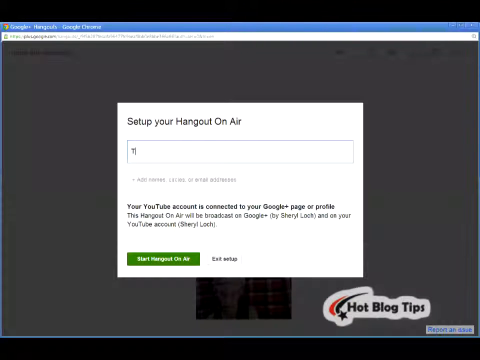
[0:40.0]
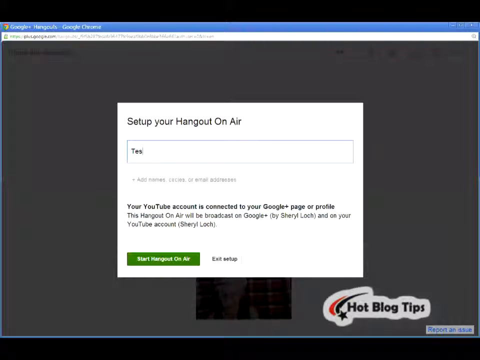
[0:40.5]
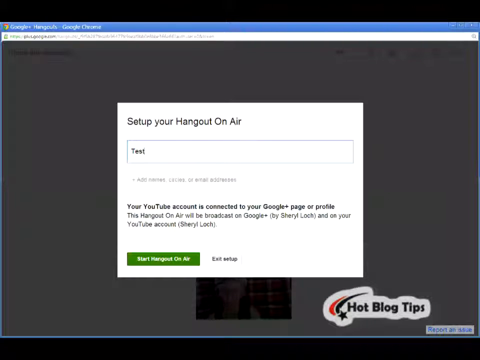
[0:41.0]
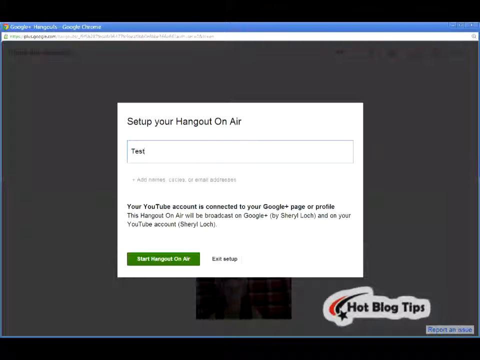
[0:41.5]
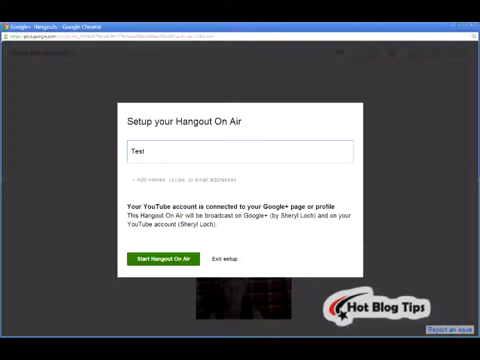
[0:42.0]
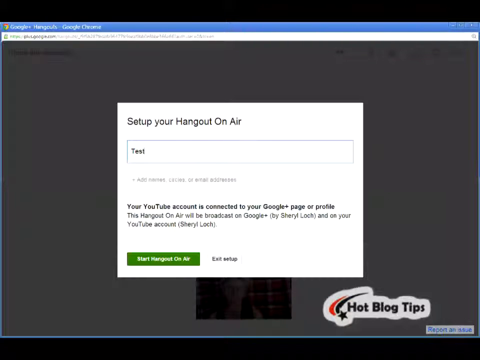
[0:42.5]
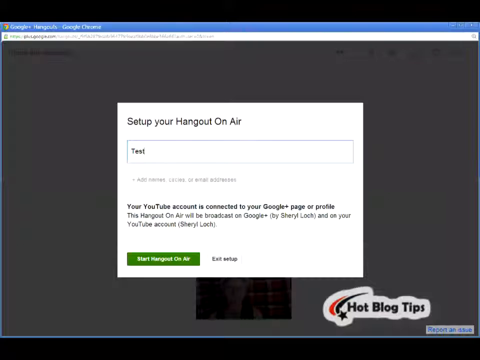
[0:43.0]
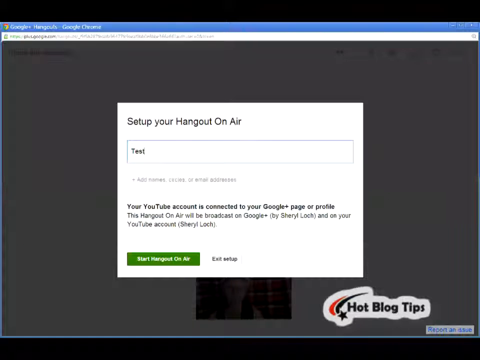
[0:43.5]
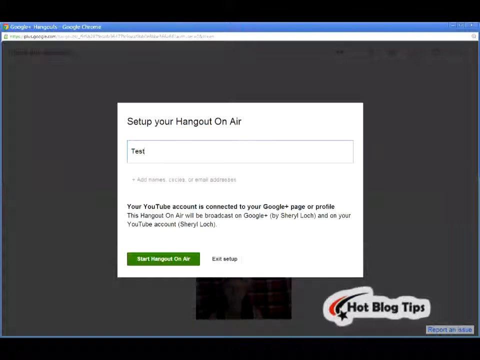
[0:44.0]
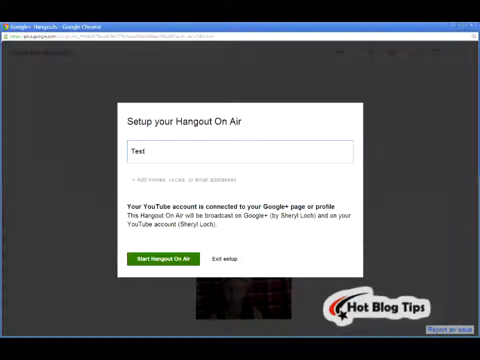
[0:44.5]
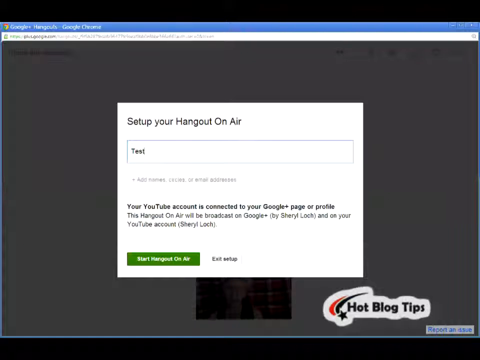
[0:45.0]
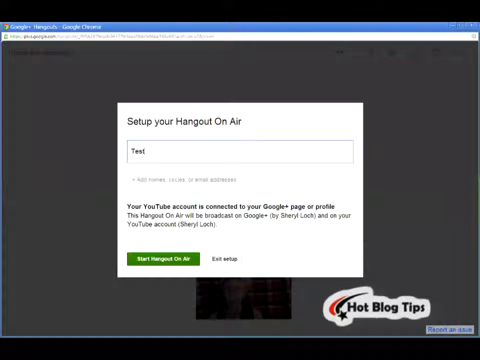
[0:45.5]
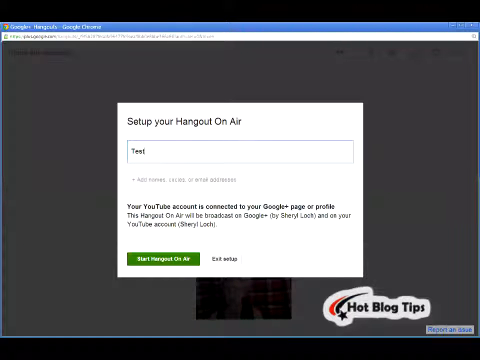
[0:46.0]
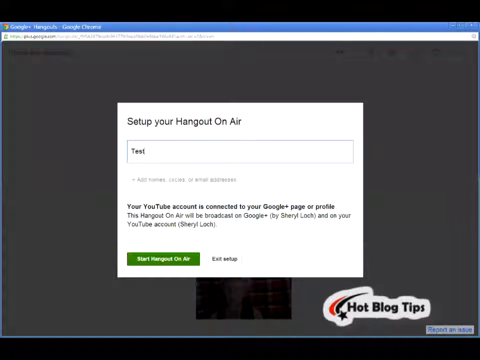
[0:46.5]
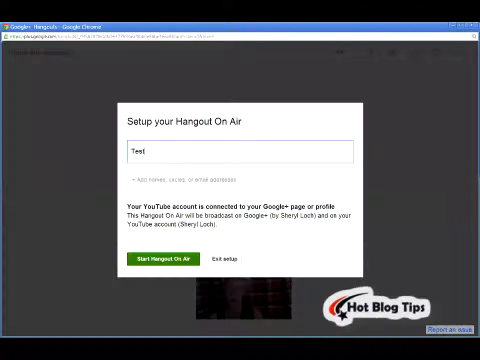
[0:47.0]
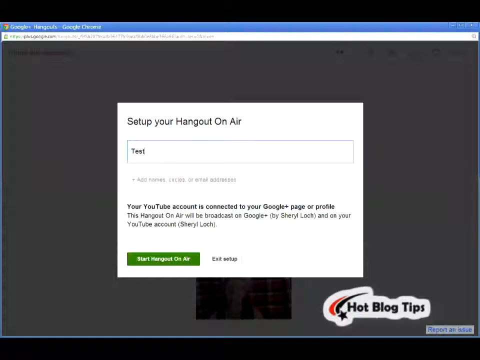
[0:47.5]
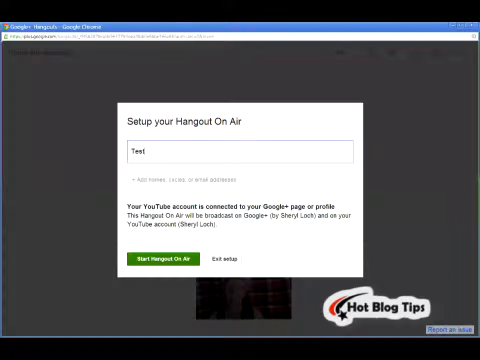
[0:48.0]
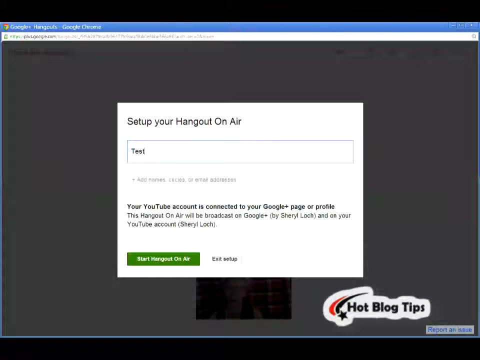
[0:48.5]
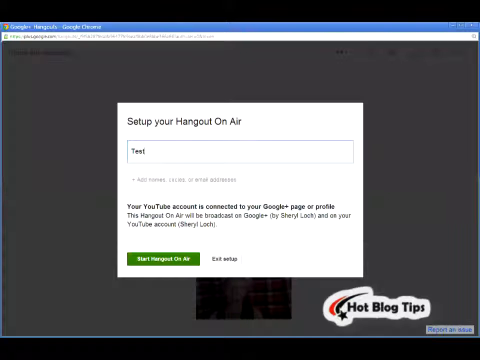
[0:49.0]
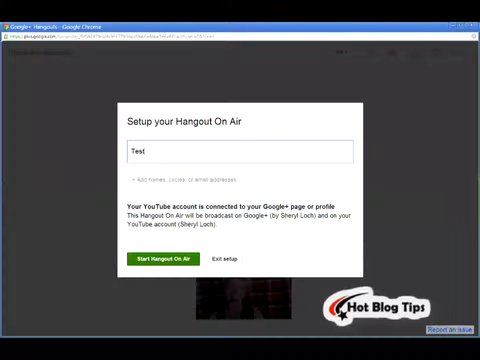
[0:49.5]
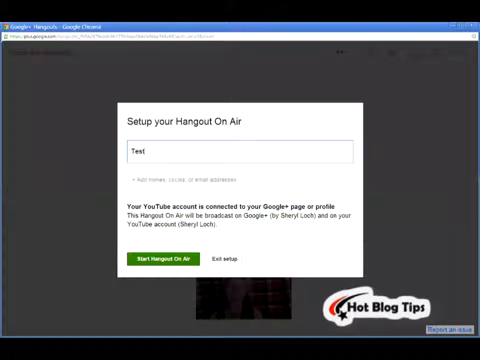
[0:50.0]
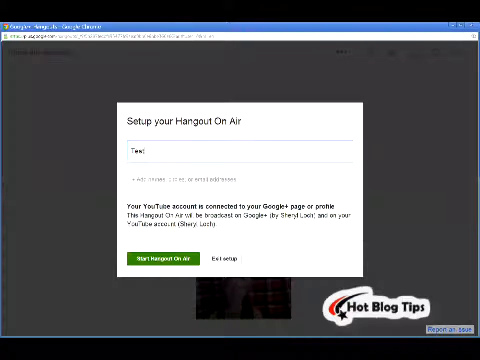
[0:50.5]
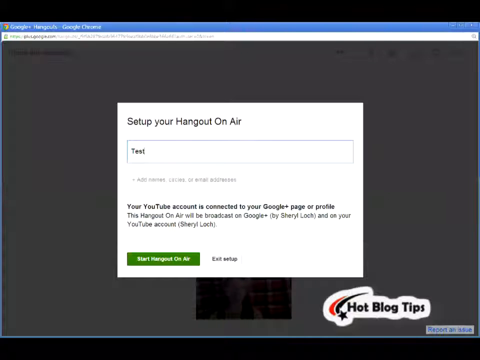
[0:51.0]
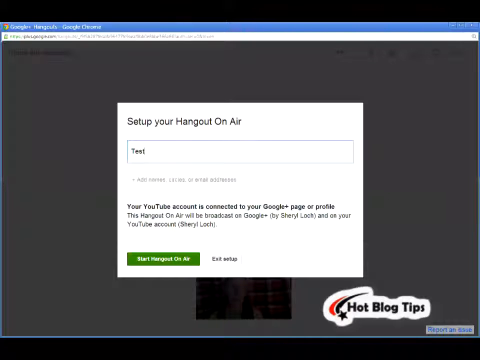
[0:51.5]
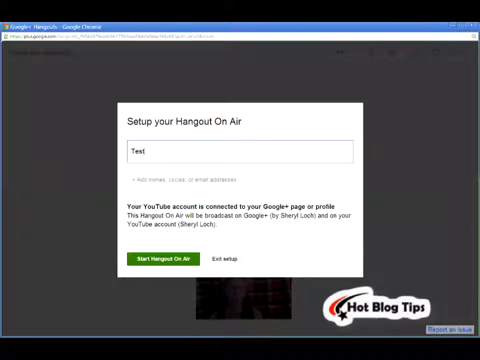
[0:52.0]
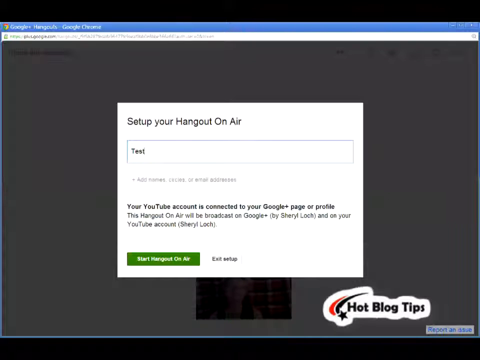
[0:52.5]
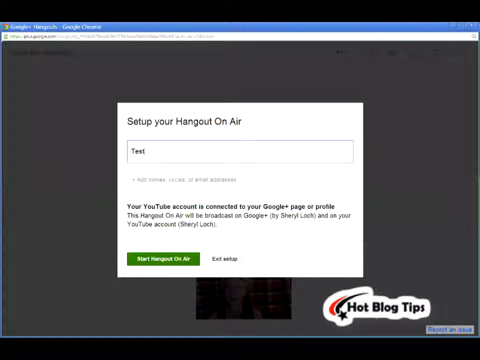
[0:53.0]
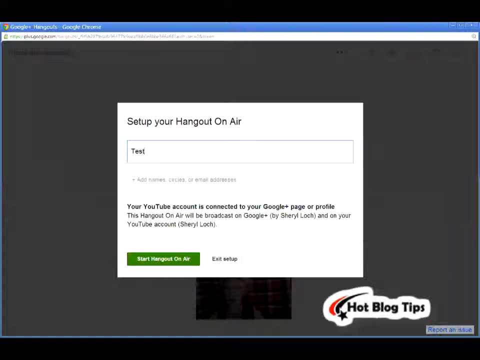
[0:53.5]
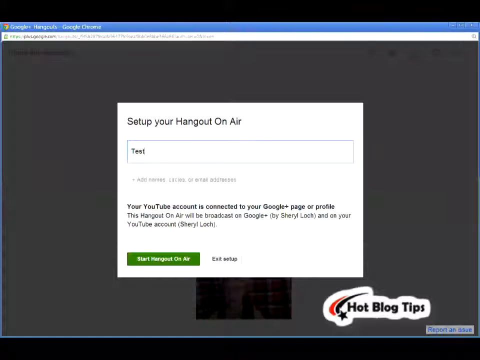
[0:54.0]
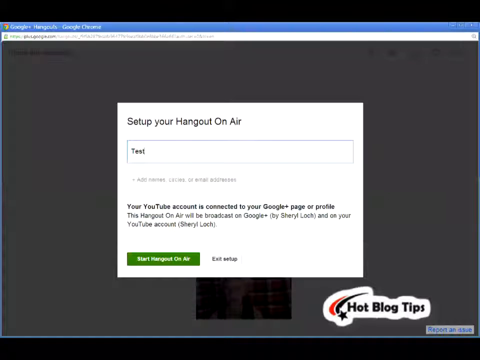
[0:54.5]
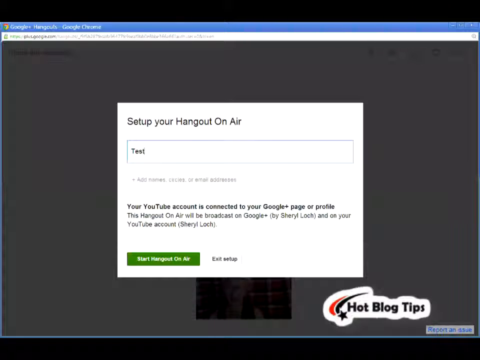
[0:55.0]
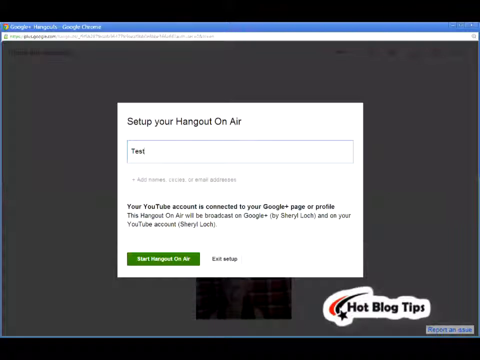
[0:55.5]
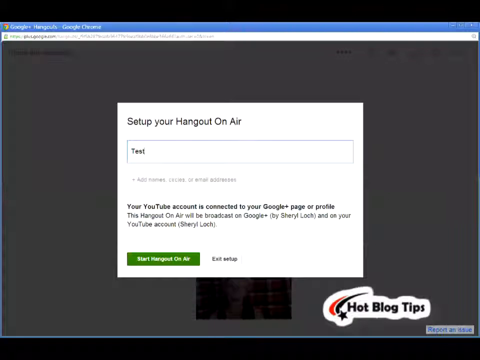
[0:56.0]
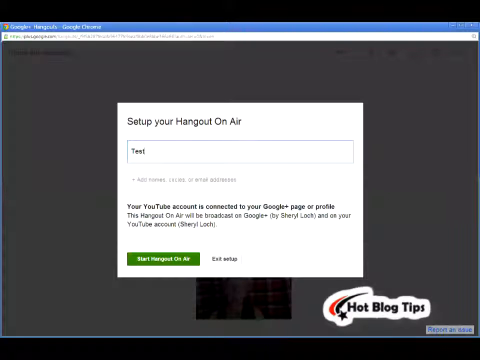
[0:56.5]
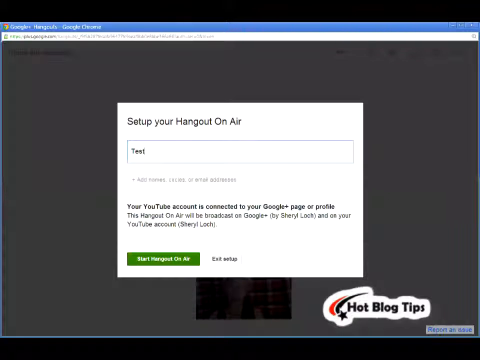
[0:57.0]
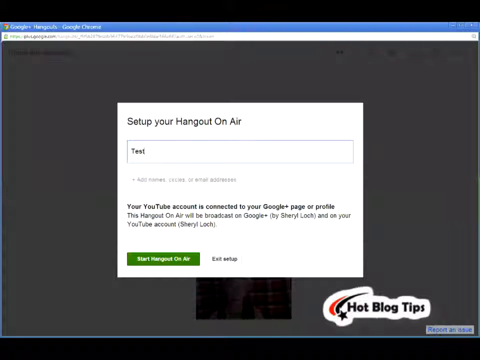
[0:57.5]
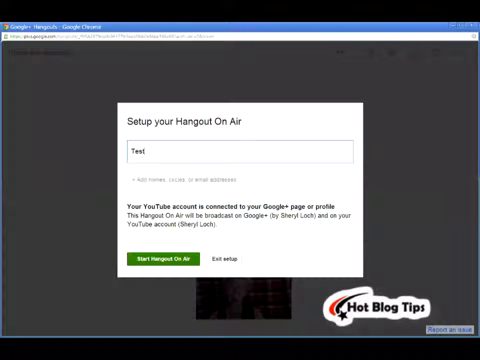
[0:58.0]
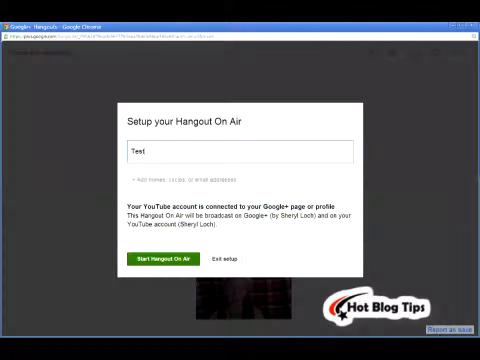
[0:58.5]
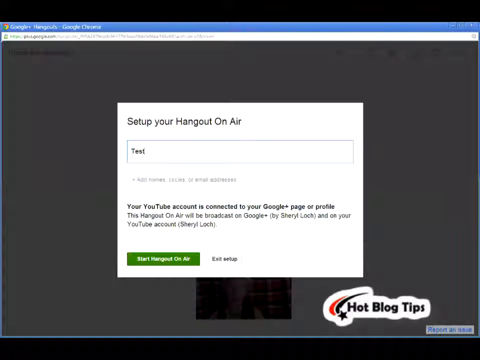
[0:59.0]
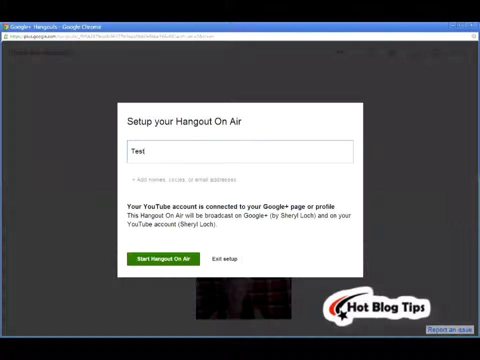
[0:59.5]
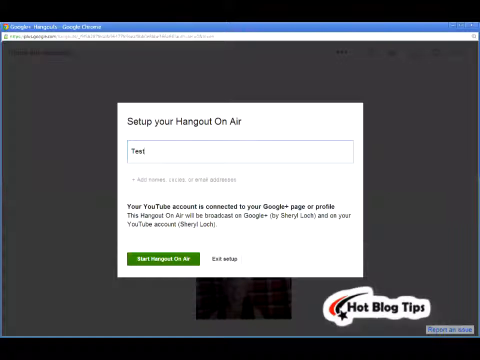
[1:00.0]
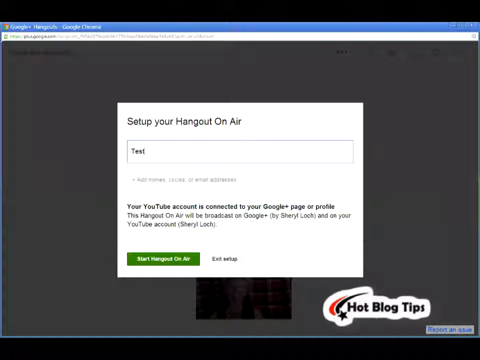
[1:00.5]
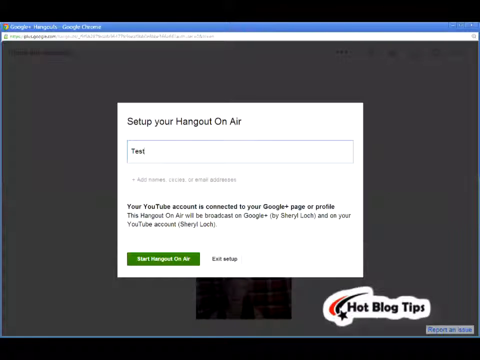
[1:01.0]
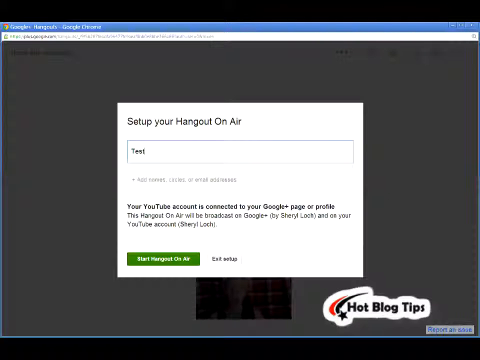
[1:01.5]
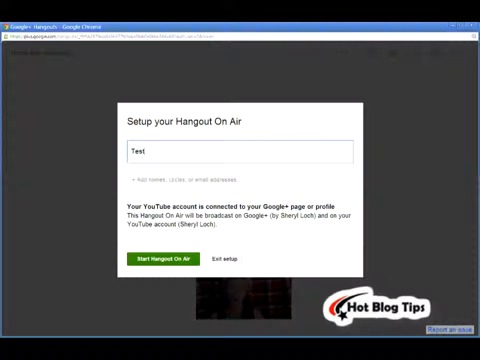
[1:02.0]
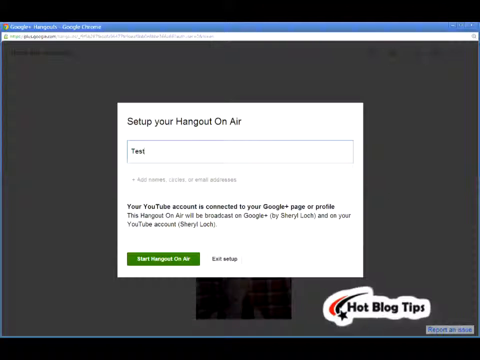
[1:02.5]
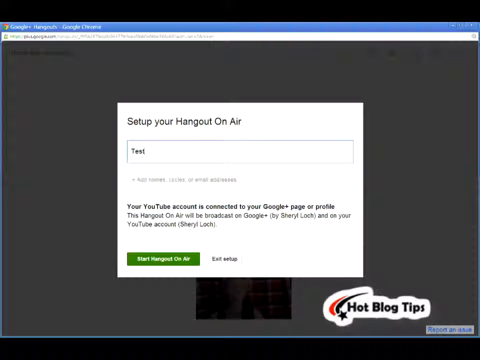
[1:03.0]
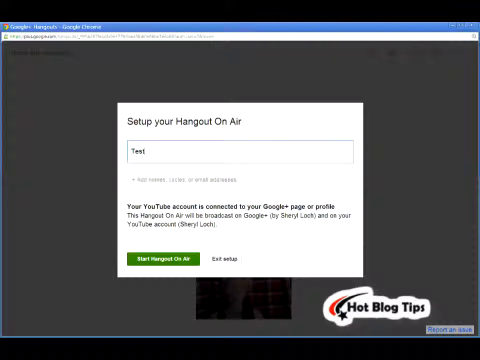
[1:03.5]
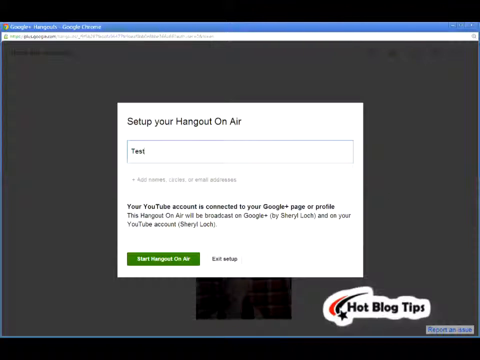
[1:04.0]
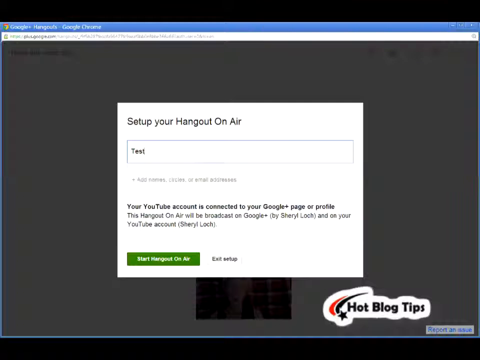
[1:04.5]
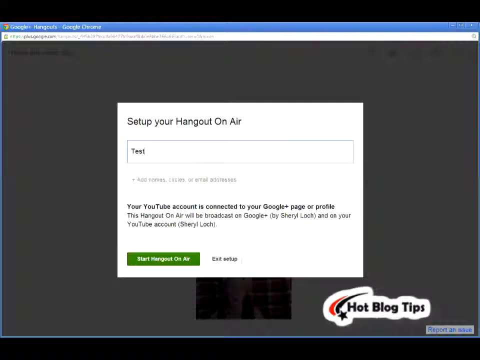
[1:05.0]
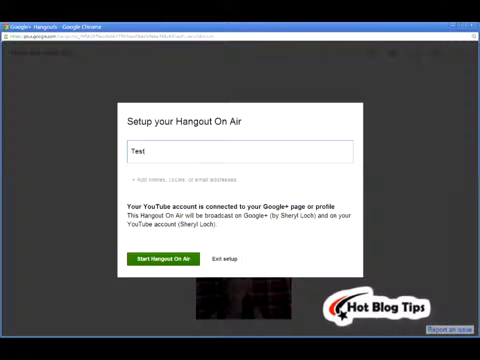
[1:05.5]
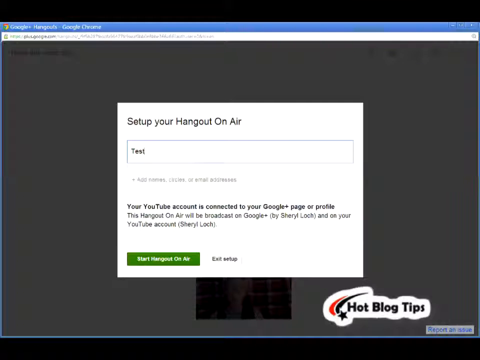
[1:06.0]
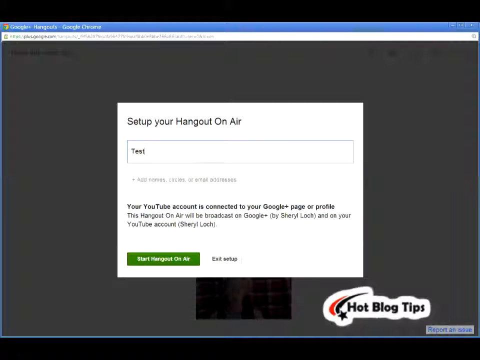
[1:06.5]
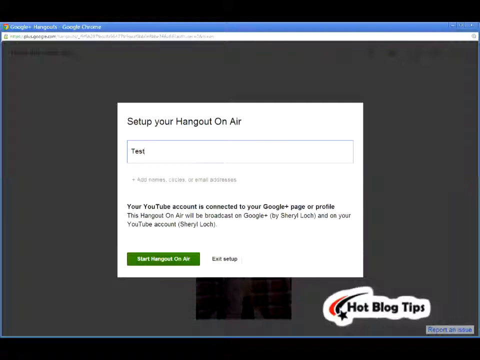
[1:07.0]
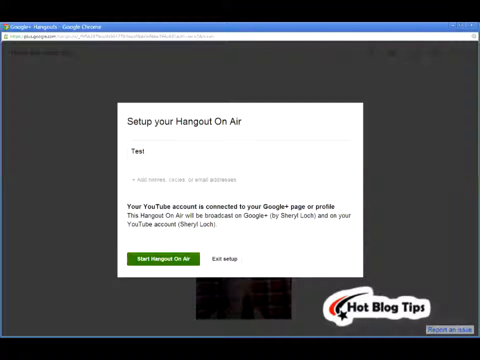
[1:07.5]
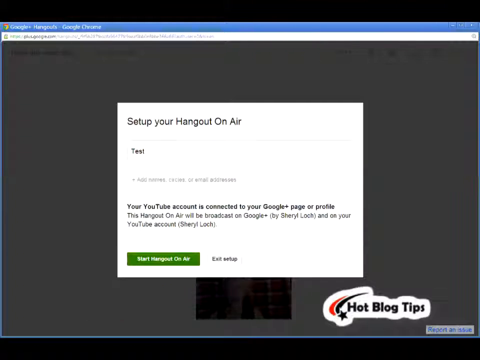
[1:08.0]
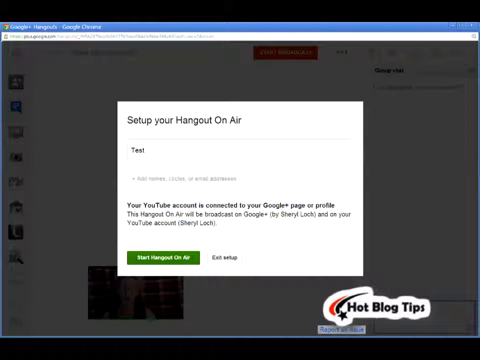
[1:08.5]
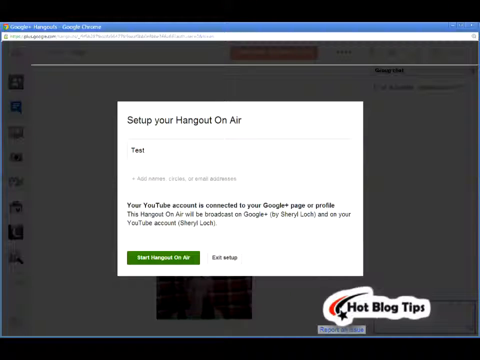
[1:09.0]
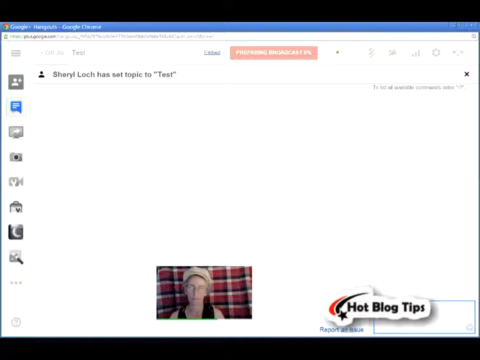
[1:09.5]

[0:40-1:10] A pop-up window is in the center, and behind it in the background is a logo reading "Hot Blog Tips" with a shooting star on the left. At the top of the pop-up is "set up your Hangout On Air," followed by a text input box. A message says the YouTube account is connected to the Google page or profile, and that the Hangout On Air will be broadcast on Google+ by the user Sheryl Loch and also plays on Sheryl Loch's YouTube account. The user types "test" into the input box. The screen then switches to a confirmation screen confirming the test event, with a picture or avatar at the center bottom, apparently of the user Sheryl Loch.